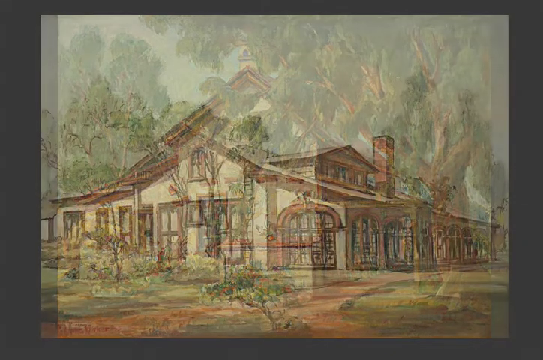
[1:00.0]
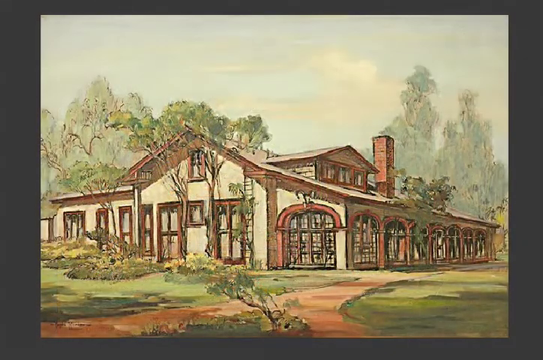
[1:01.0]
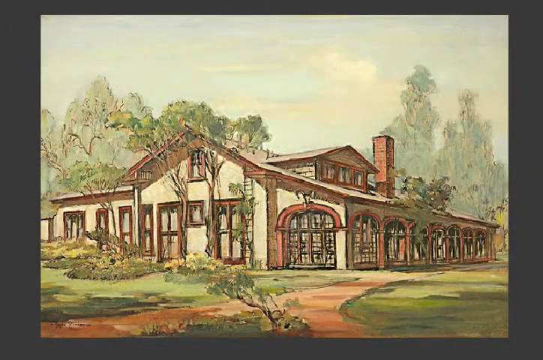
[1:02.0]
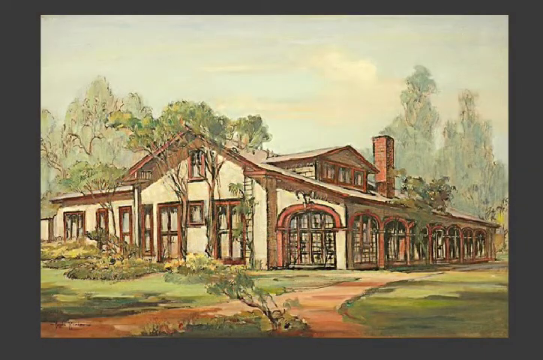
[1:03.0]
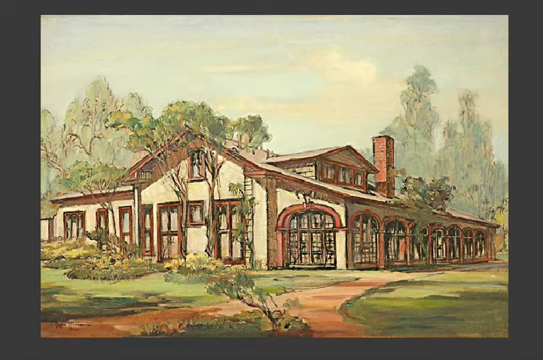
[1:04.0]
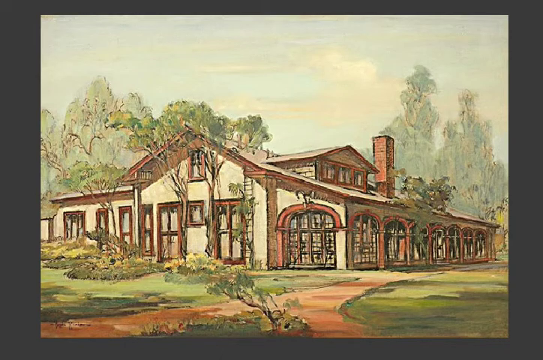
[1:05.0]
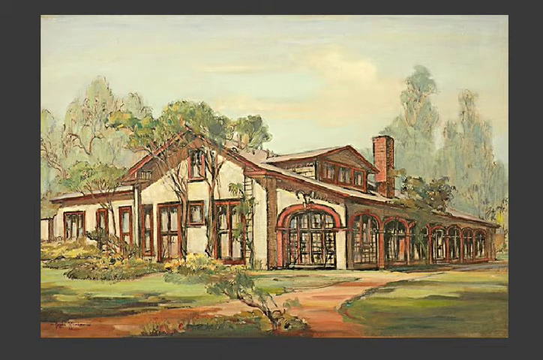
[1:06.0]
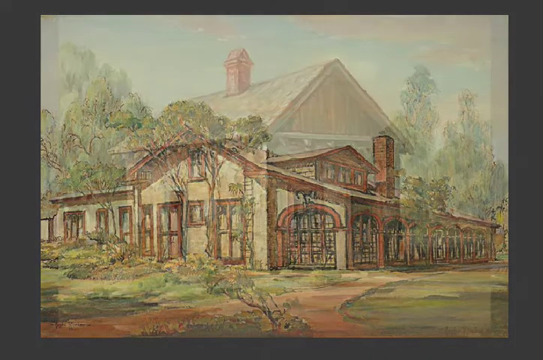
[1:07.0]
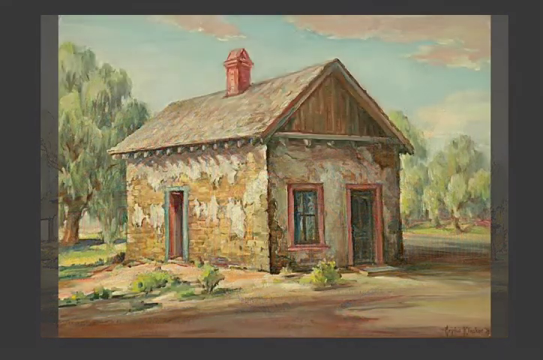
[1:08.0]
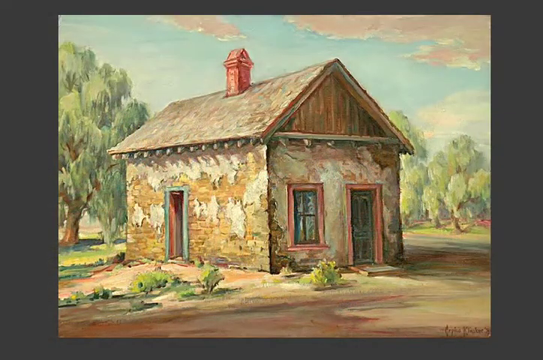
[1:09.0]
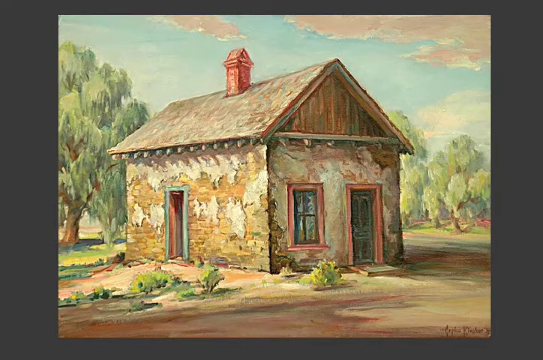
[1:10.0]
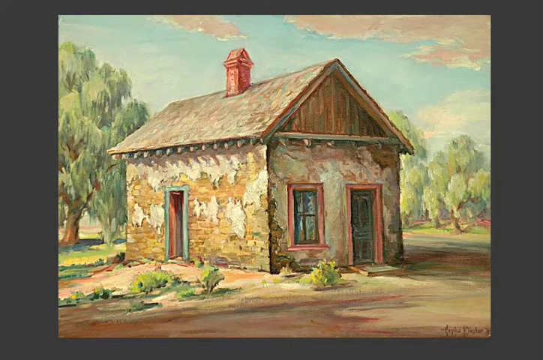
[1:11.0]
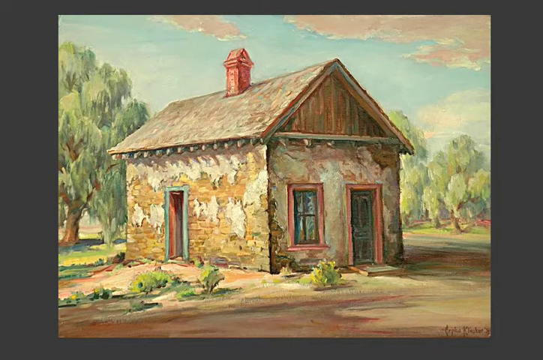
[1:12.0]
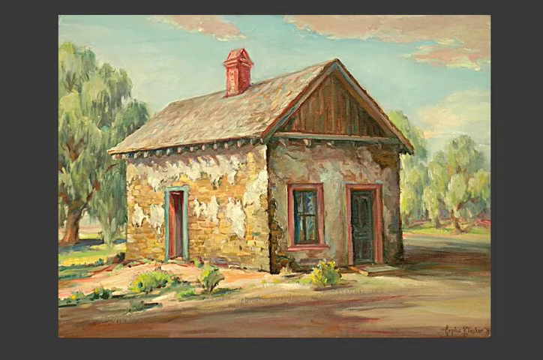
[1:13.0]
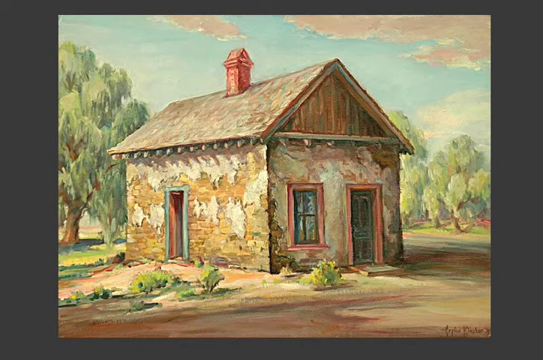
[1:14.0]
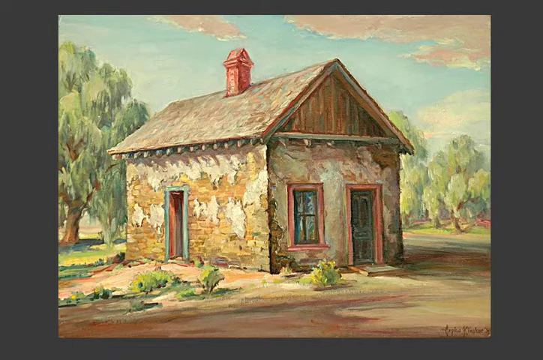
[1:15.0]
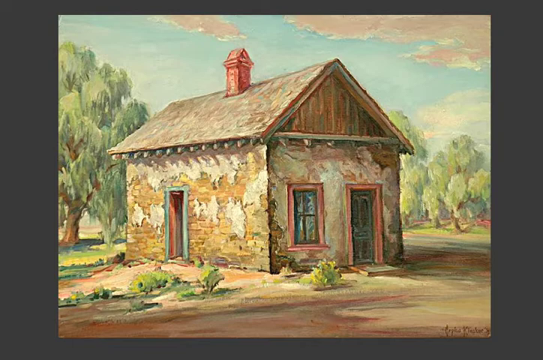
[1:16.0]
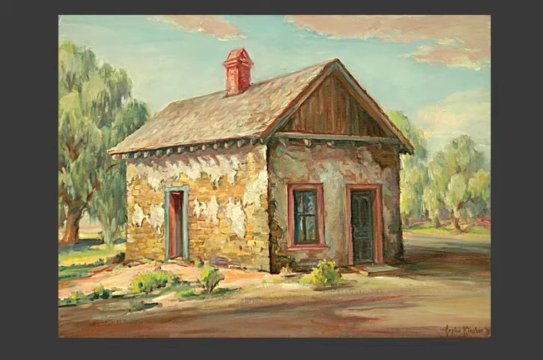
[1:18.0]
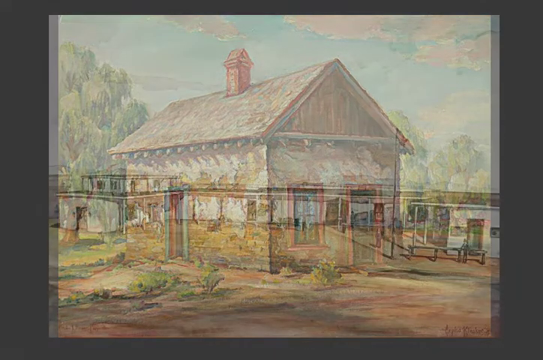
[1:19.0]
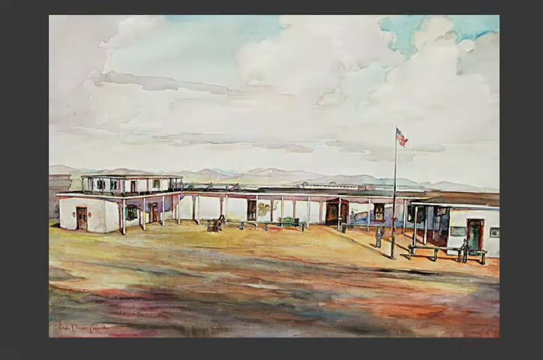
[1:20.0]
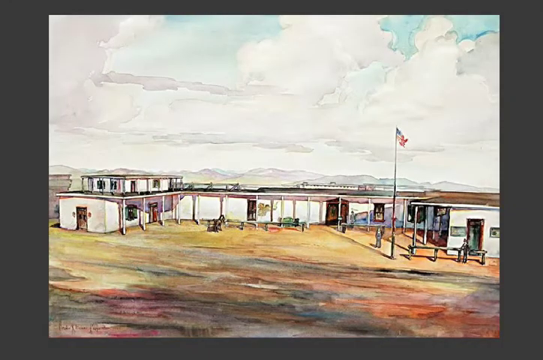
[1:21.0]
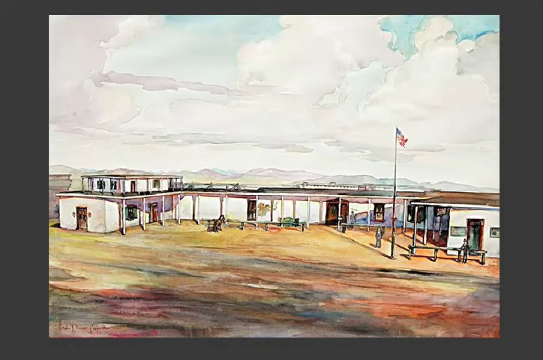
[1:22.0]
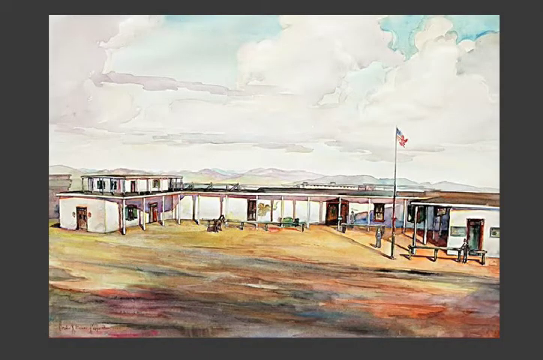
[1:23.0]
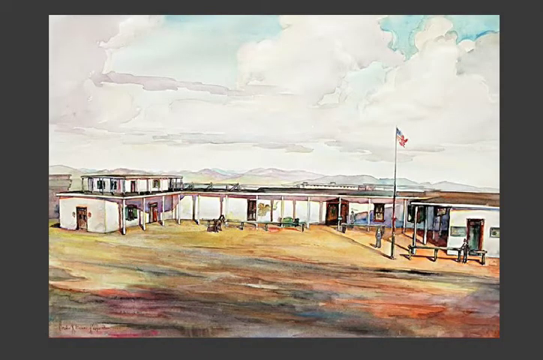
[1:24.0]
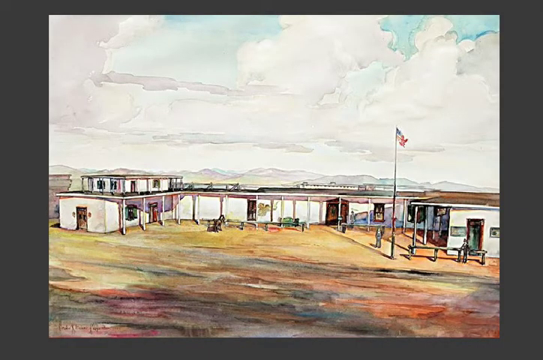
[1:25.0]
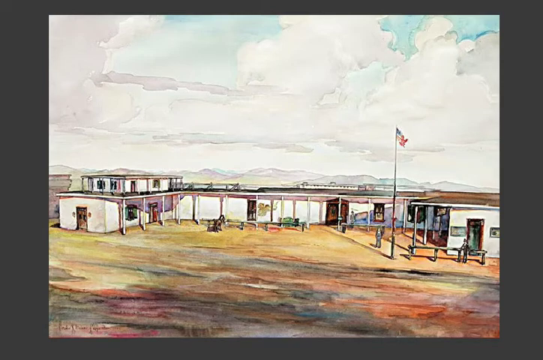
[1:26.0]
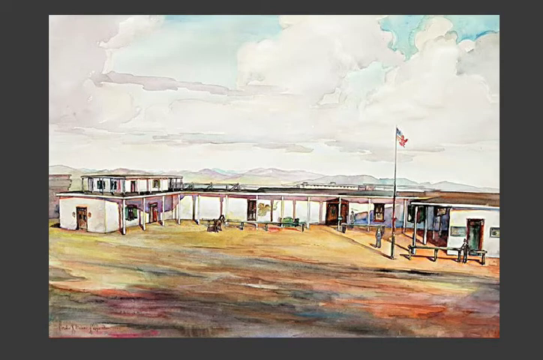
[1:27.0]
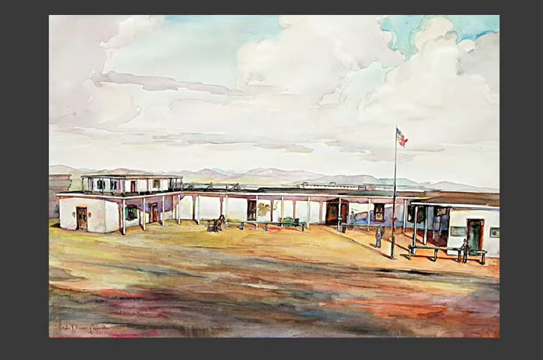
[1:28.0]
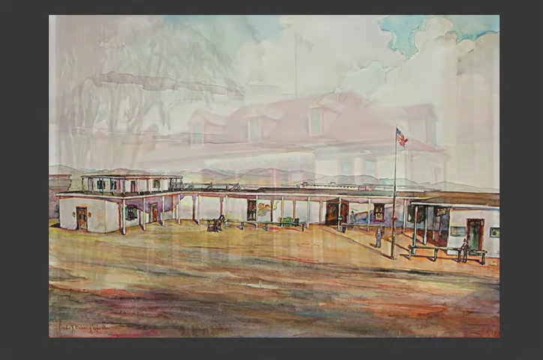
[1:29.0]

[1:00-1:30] Over the gray background is a painting of a house. It seems to be beige with giant gray windows around it and seems to be situated on a field with trees in the background. There is quite a bit of detail in the painting. It is replaced with another painting of a house, this one seemingly more on the decrepit side. It is missing paint on the left-hand side and has a chimney and a door. It seems to be on a barren field with trees behind it. The house is beige, with a green door with red trim. That is replaced with a painting of what looks to be a motel or a longer building, white with columns in the front. In the foreground there seems to be an American flag on a pole. In the background are the sky and some mountains. There seem to be brown doors every couple of feet on the outside of this building.